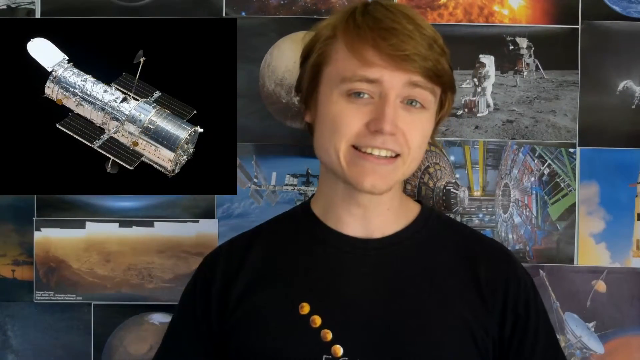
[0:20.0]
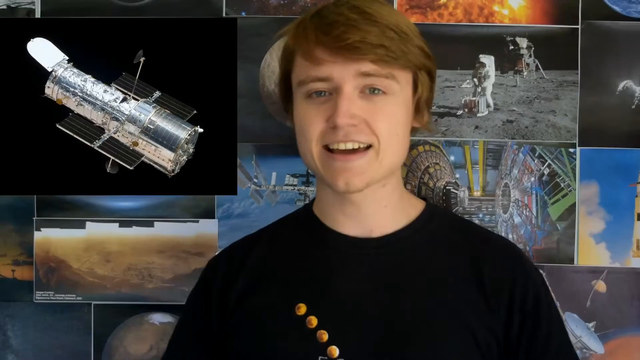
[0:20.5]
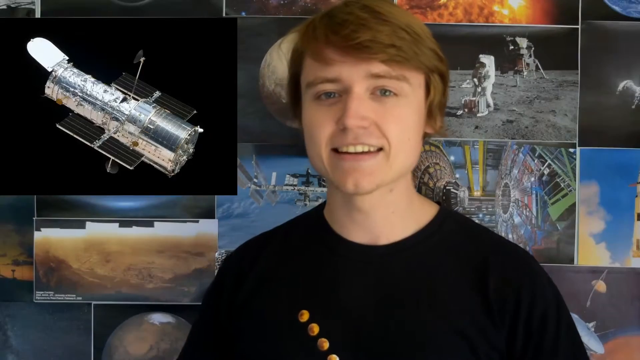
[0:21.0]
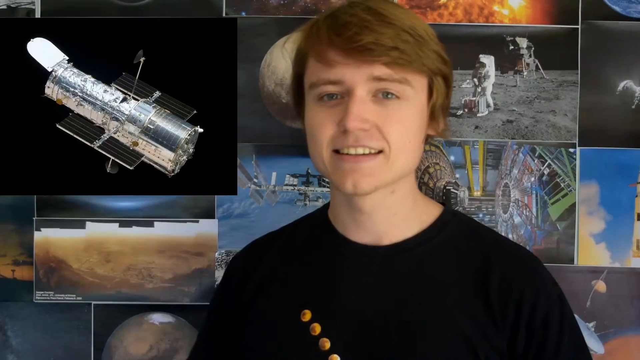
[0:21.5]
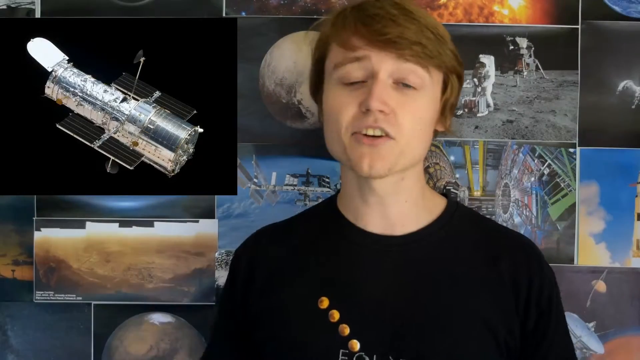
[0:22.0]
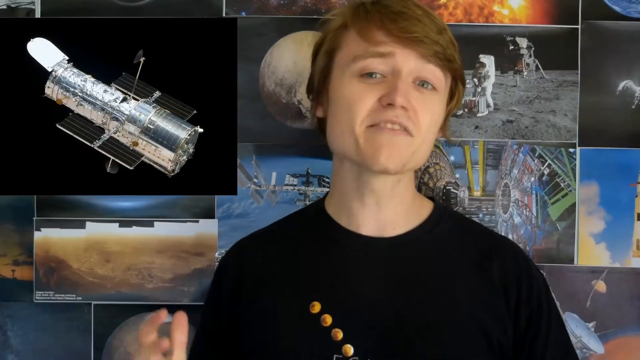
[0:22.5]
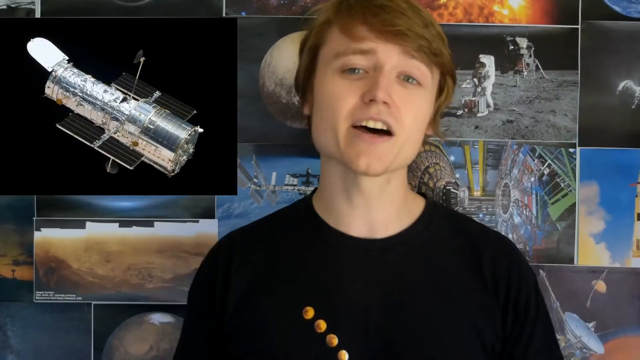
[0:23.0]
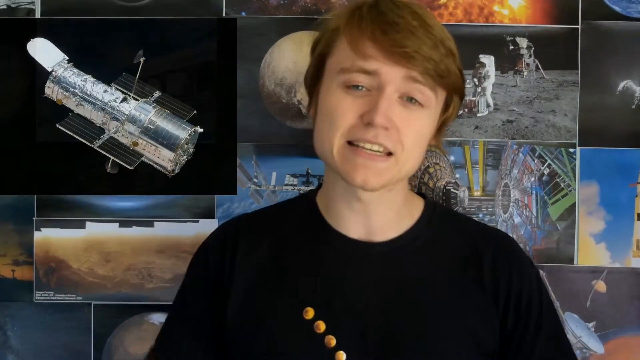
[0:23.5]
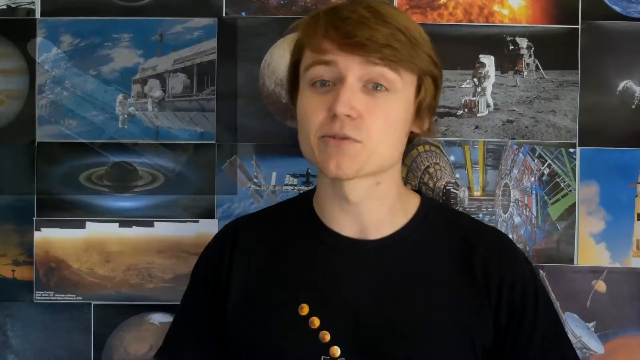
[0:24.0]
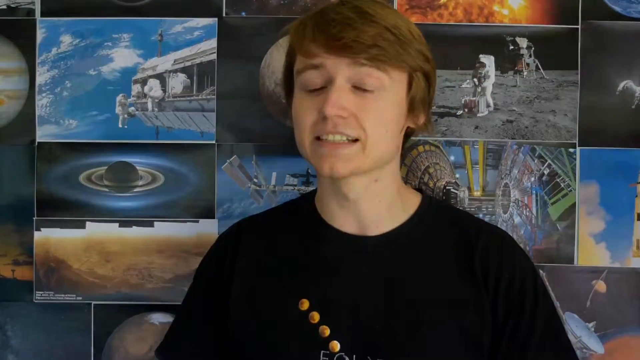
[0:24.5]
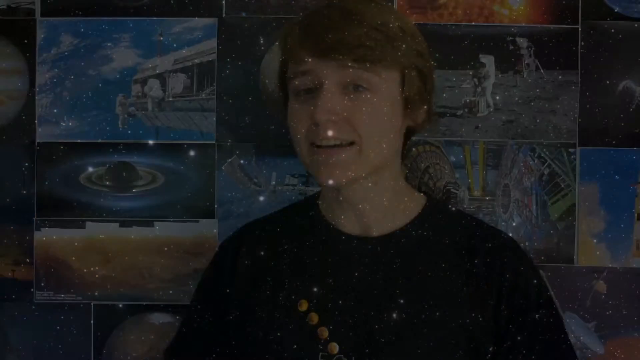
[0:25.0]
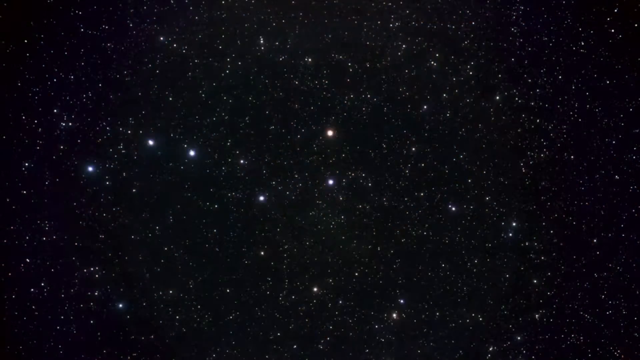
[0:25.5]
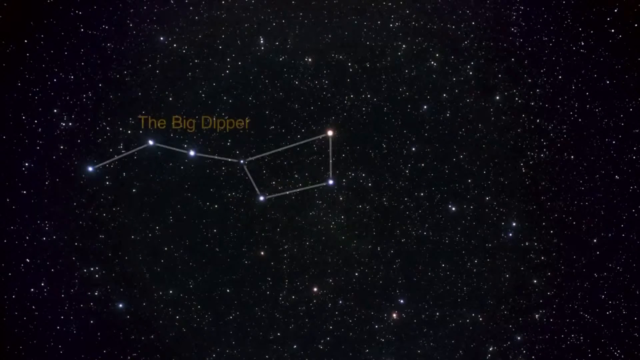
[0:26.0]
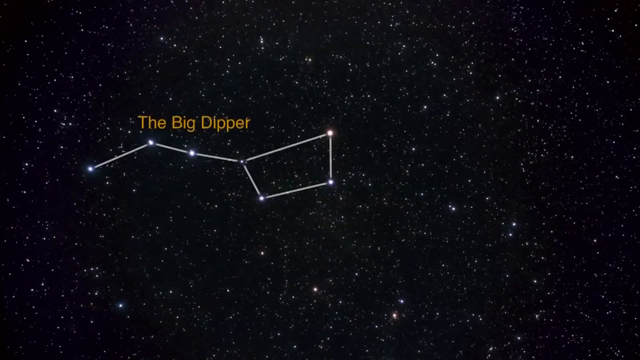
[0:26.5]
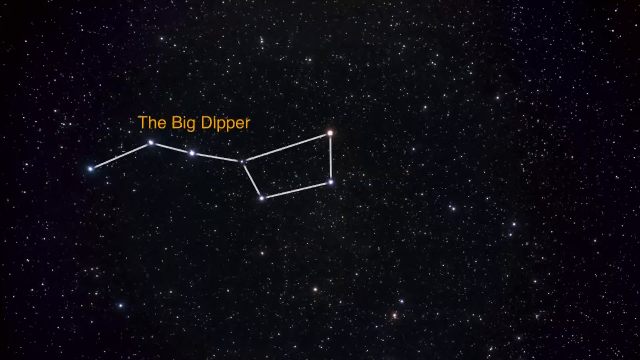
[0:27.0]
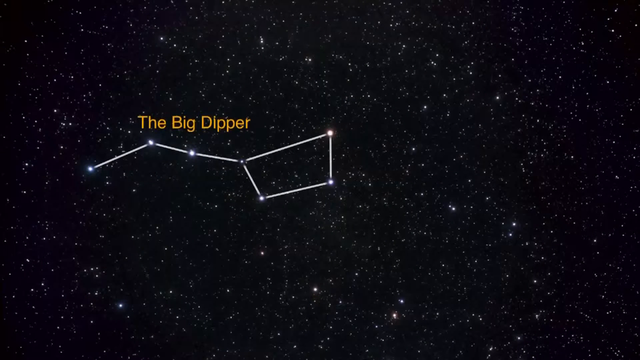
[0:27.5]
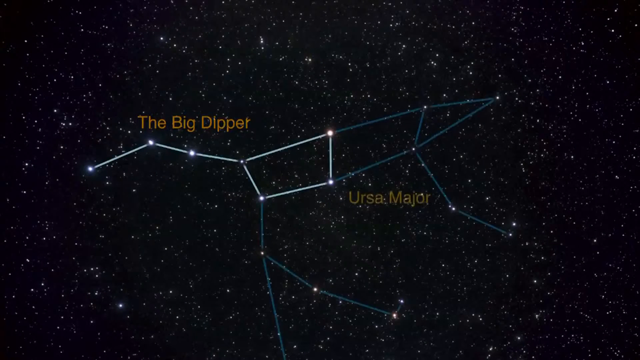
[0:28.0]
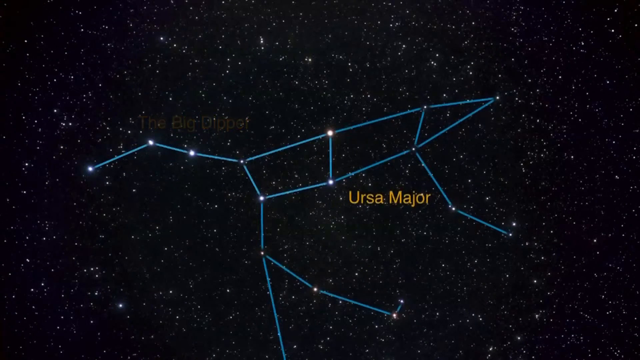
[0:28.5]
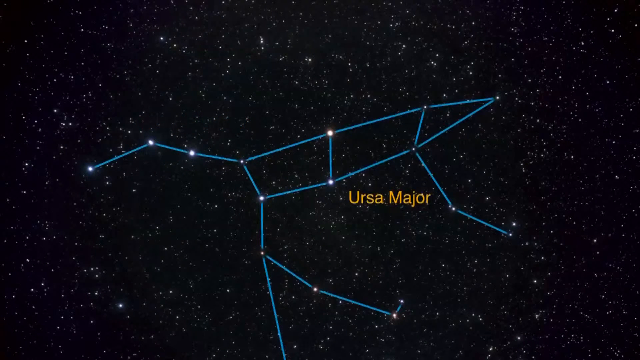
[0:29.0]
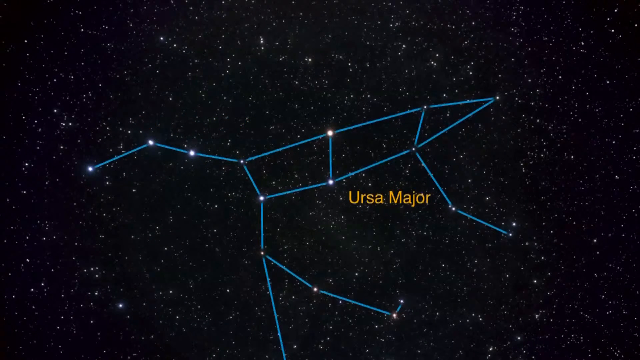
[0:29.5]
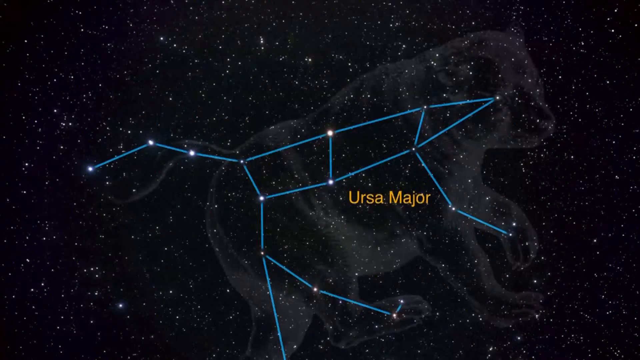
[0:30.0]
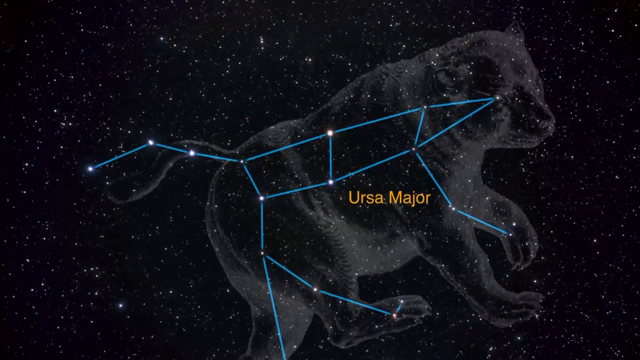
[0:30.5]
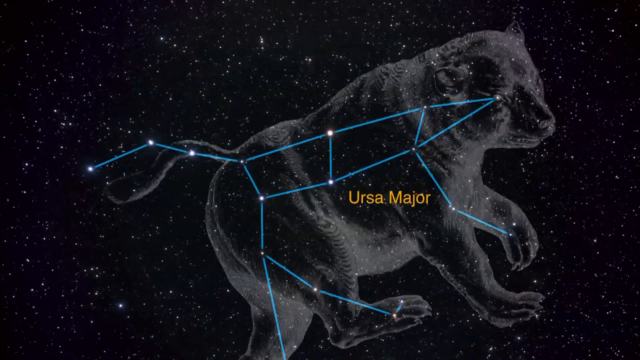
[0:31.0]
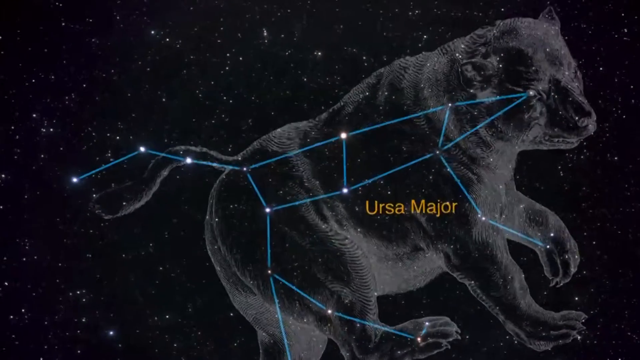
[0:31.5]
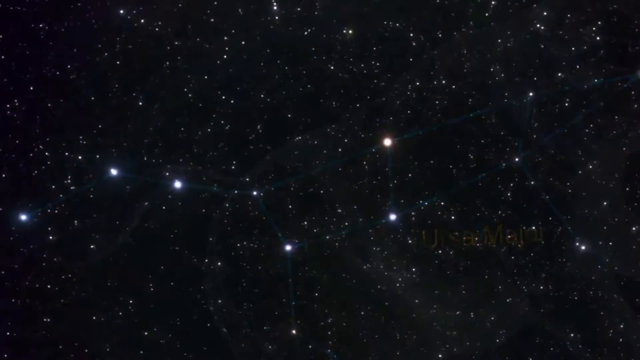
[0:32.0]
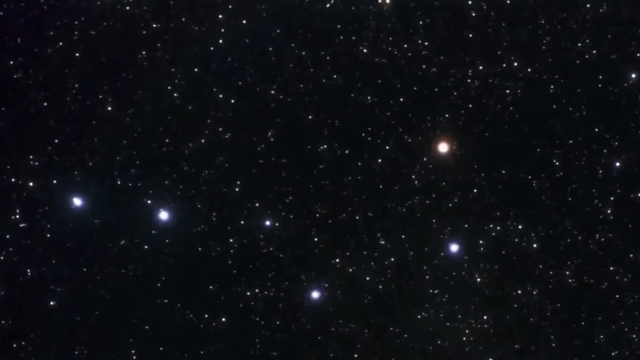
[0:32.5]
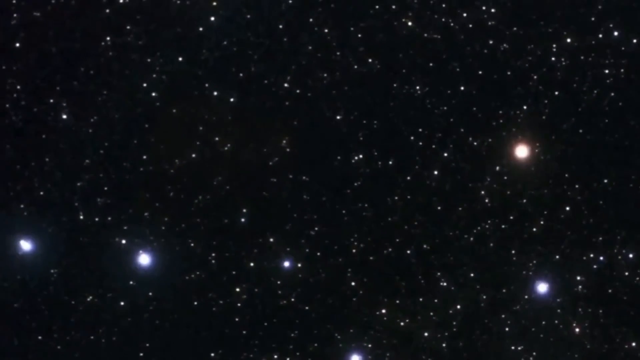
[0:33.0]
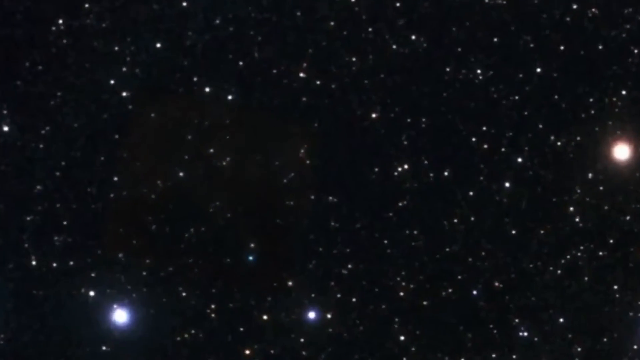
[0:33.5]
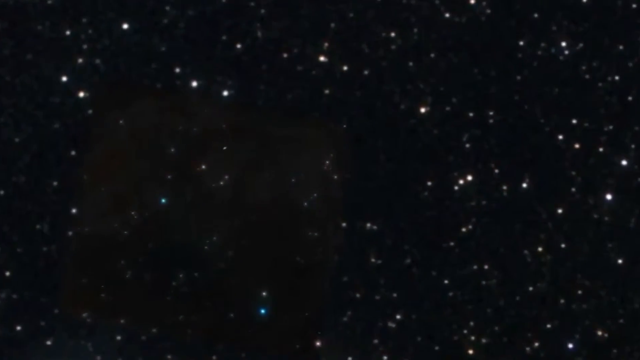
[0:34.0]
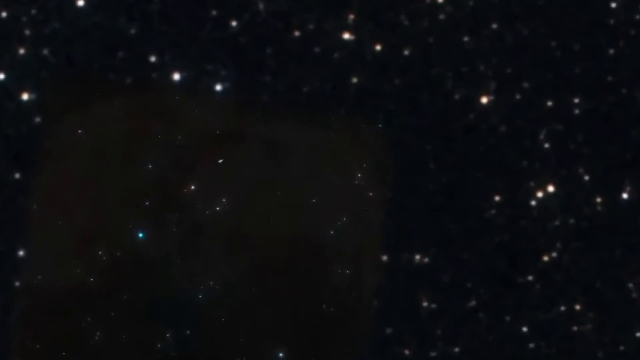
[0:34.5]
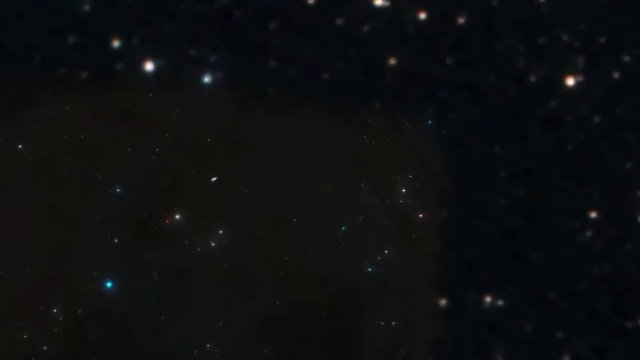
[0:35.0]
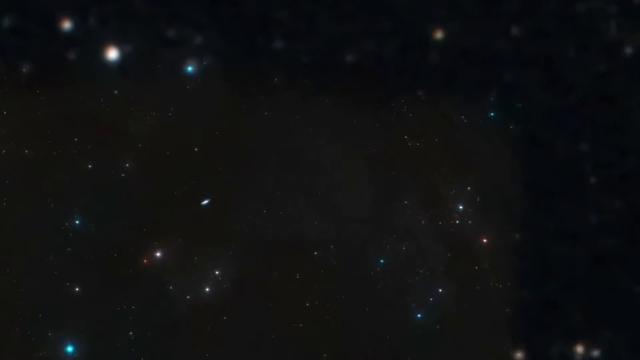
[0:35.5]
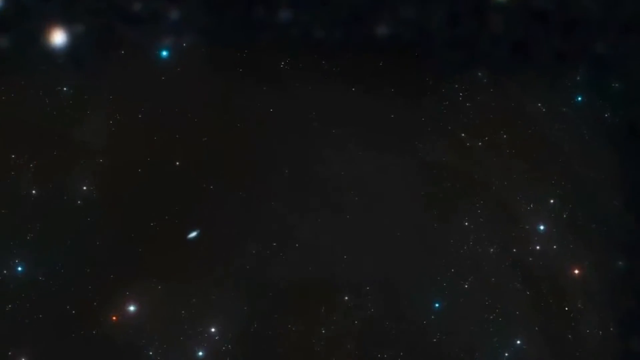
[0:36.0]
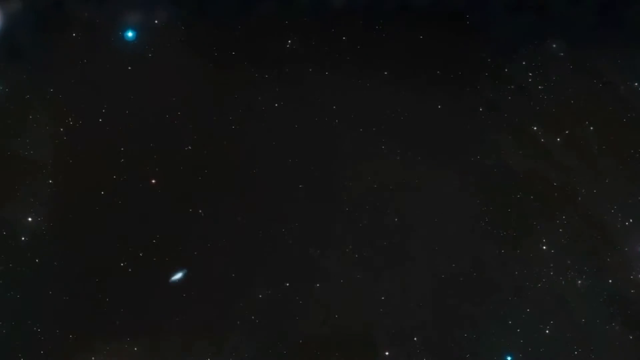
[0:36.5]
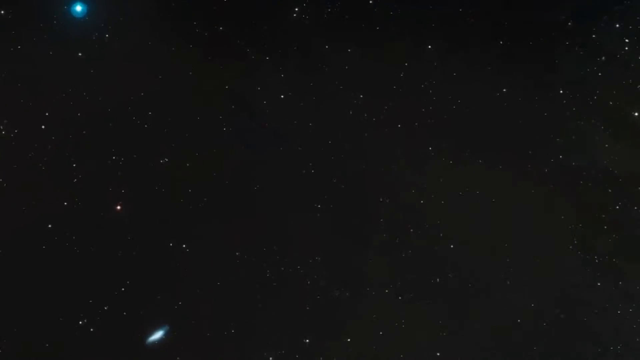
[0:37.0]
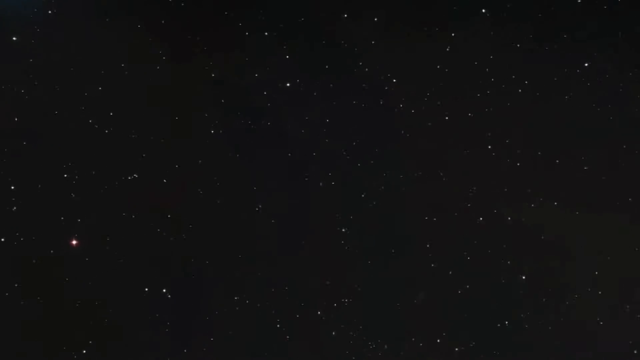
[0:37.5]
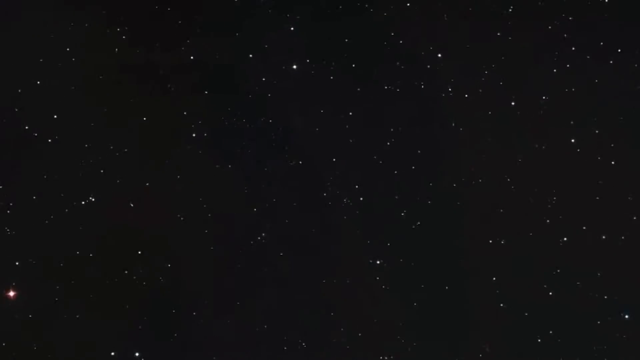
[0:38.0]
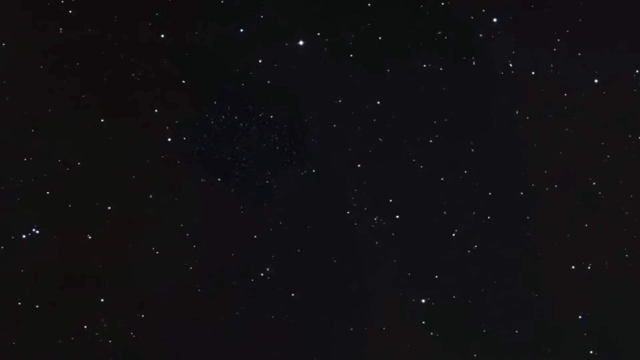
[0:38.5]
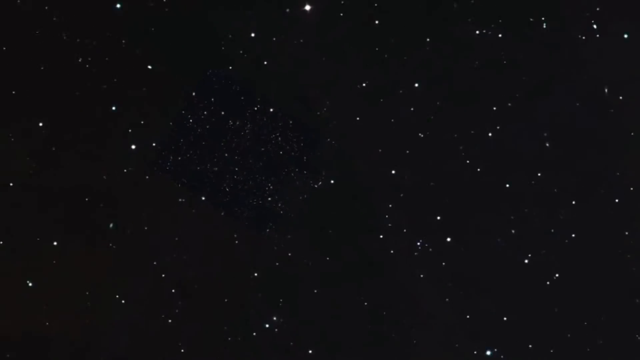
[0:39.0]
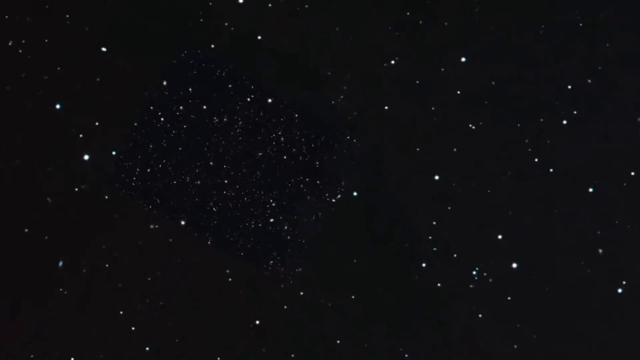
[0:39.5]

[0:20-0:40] Animals appear, including shadow pictures of animals. There are many stars and different kinds of visualizations of the sky, and the boy is talking.